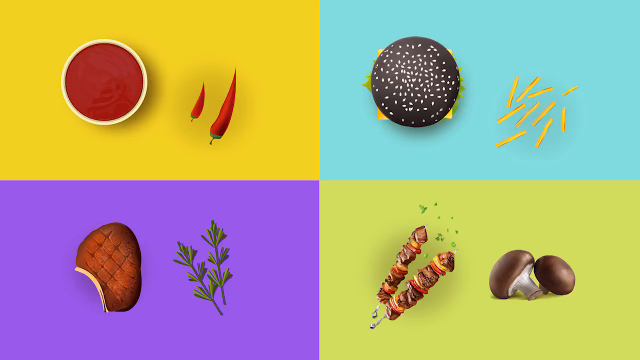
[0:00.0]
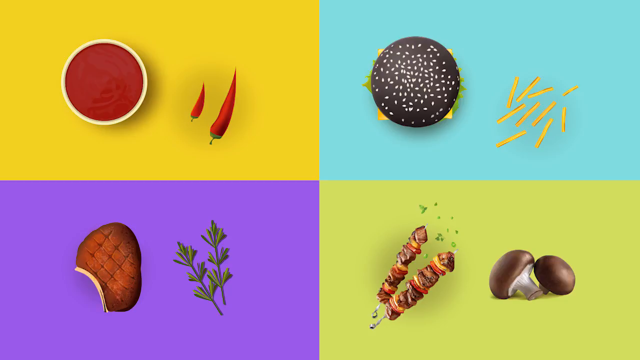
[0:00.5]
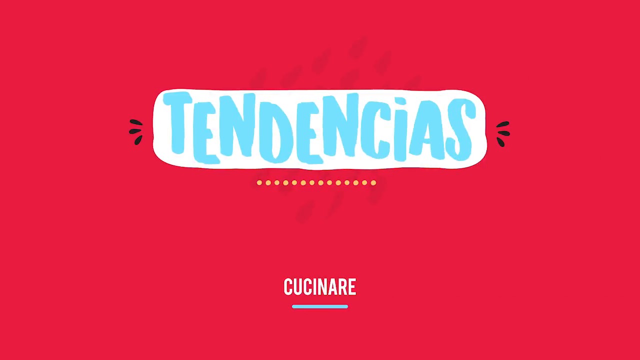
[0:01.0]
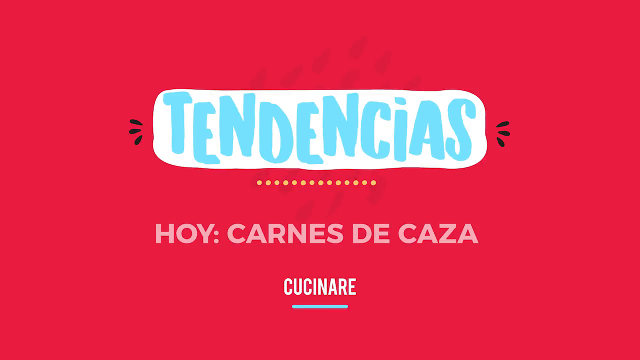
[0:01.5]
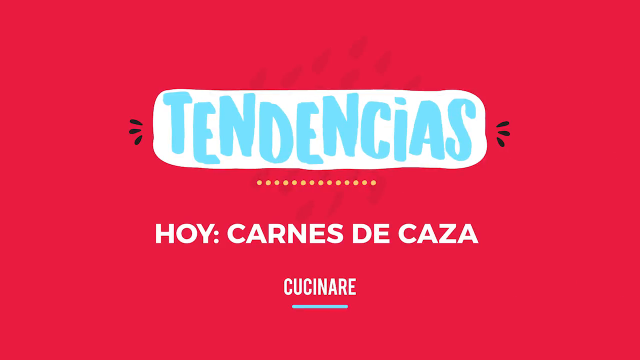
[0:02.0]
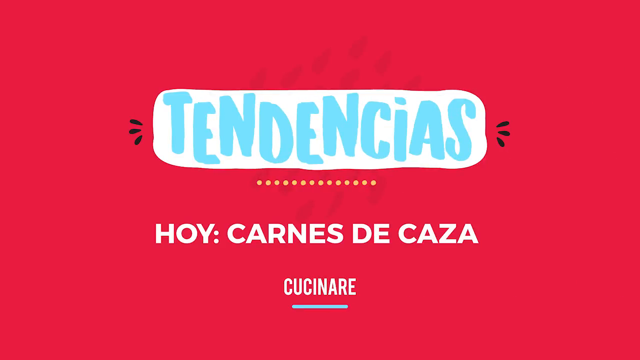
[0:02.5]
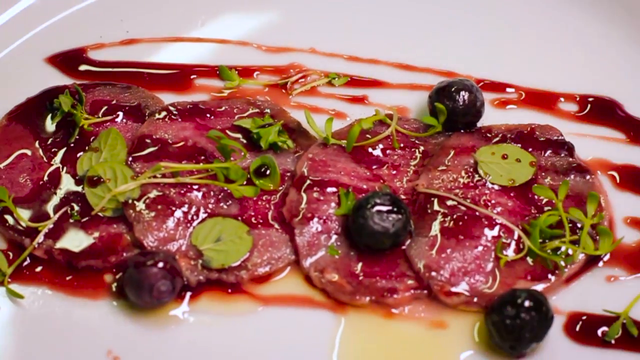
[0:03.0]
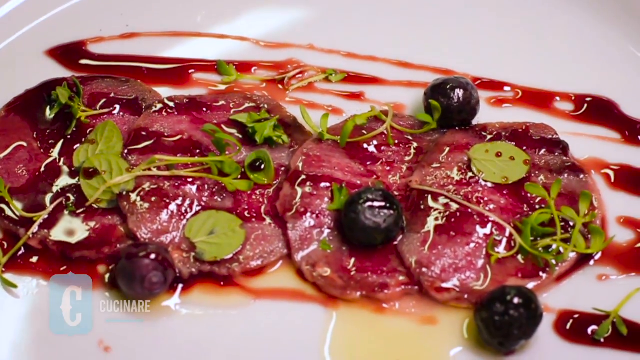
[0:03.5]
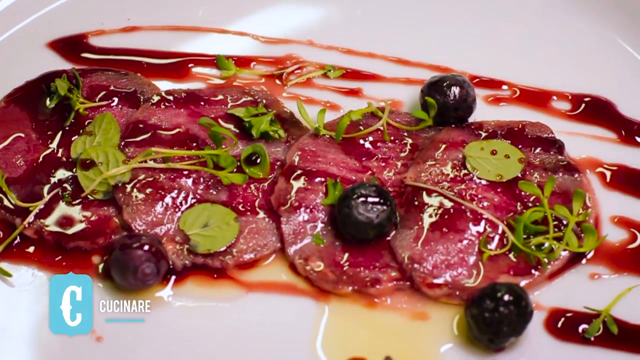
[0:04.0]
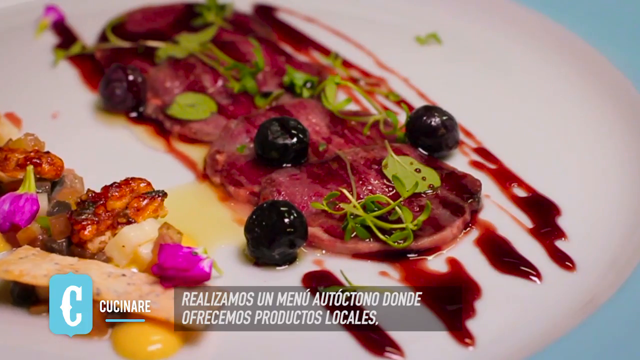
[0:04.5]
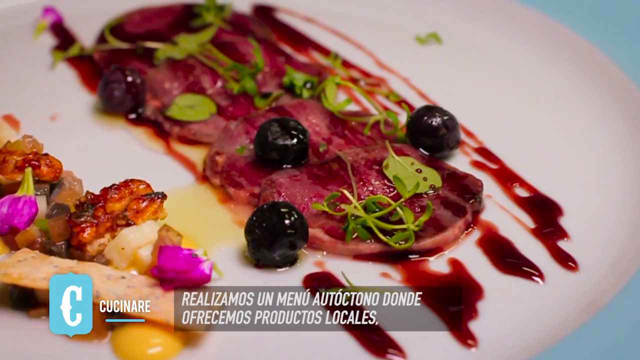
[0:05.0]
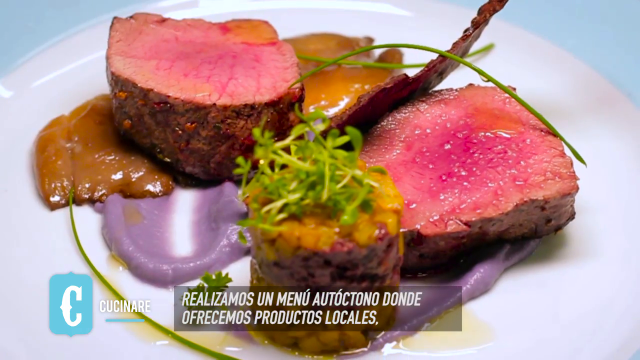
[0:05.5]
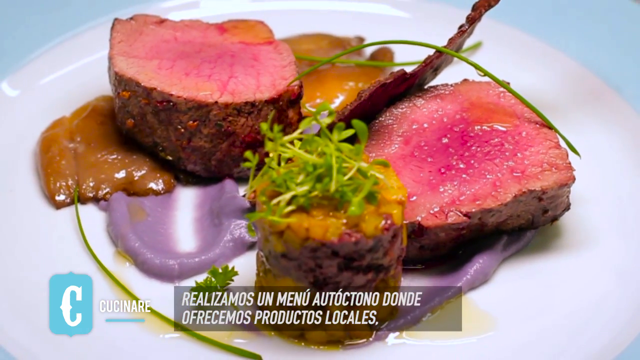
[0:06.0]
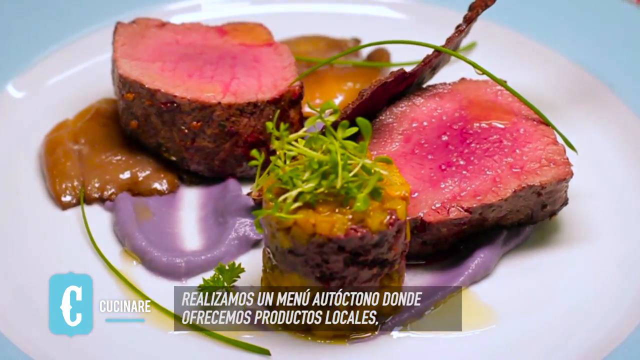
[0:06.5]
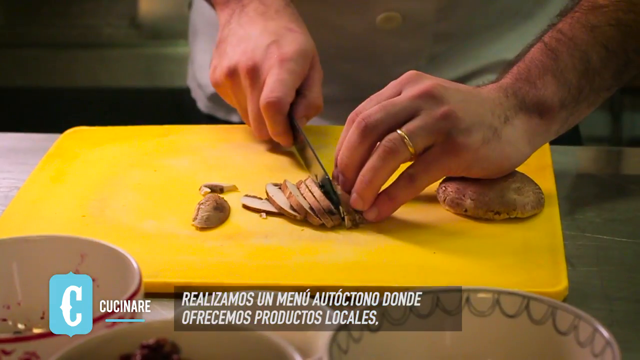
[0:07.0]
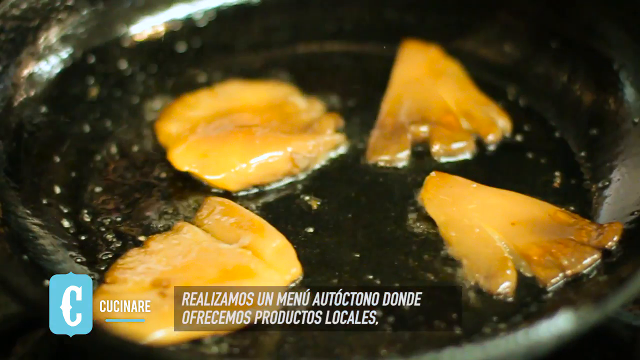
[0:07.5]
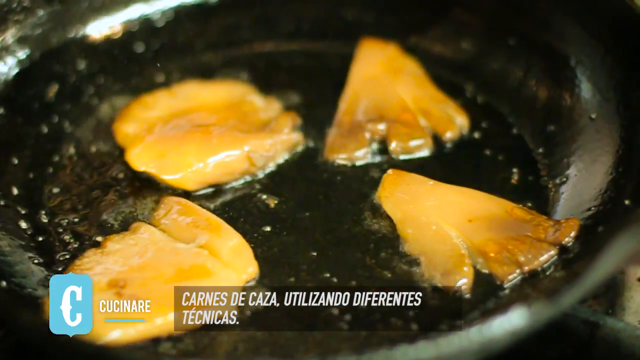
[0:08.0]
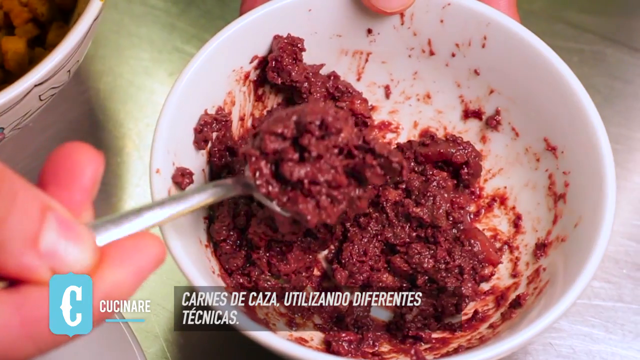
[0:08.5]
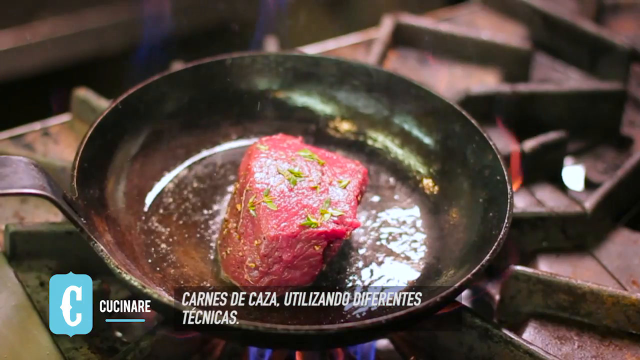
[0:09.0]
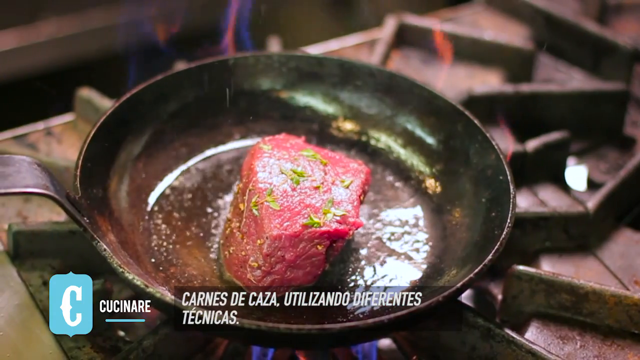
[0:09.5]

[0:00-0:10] A still image, likely from a promotional recipe video, shows different food items in four sections. The top left has a yellow background and what looks like a bowl of red sauce or chili. The top right, with a blue background, shows a hamburger on a black bun and some fries. The bottom left has a purple background and what looks like a piece of meat and a sprig of parsley or another herb. The bottom right has a green background and shows two kebabs and brown mushrooms. The slide then changes to a red background with a Spanish title that translates to "tendencies," and Spanish text below the title that translates to "Today Game Meets"; the channel program is Cook Cuisine. The video then cuts to a dish of beef carpaccio, thinly sliced raw beef or veal, with pieces of olives around it. Another meat-based dish, a deer or venison loin cooked medium rare, is served with a purple puree, possibly made from purple potatoes or another vegetable, and a yellow-orange component topped with fresh herbs. In the next scene a cook slices mushrooms and fries another vegetable in a pan. In another scene the chef mixes some kind of beef mixture in a white bowl. Next, a piece of meat is fried in a frying pan.